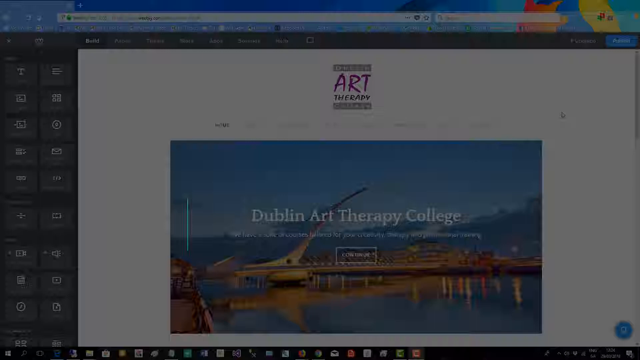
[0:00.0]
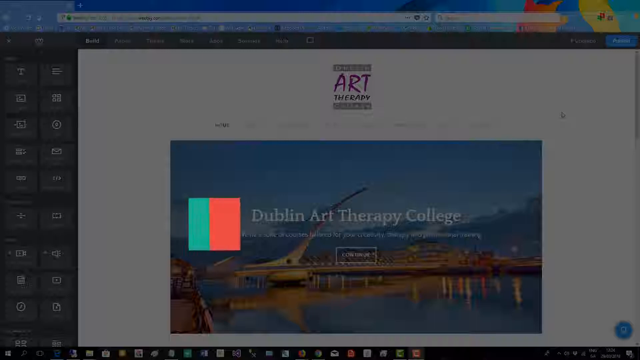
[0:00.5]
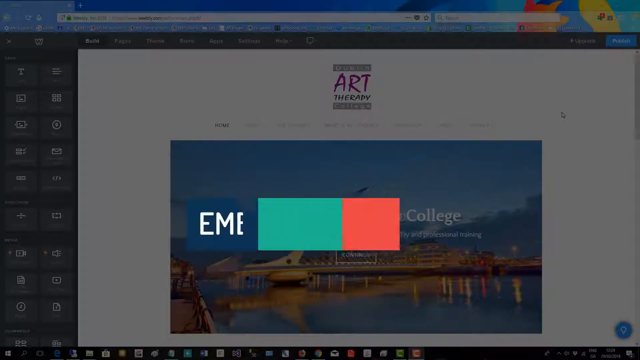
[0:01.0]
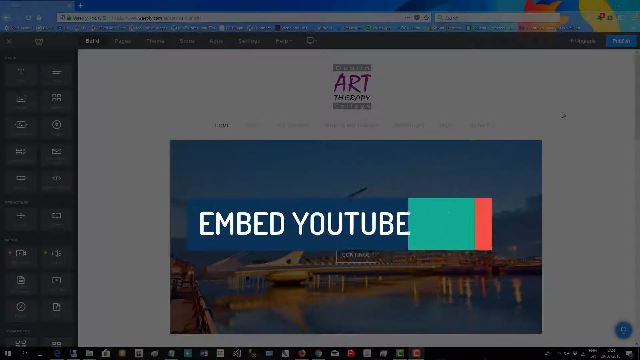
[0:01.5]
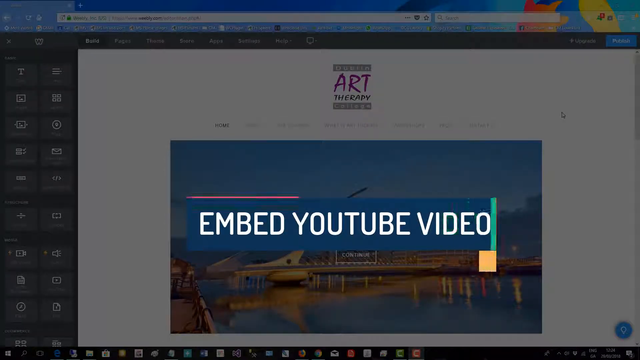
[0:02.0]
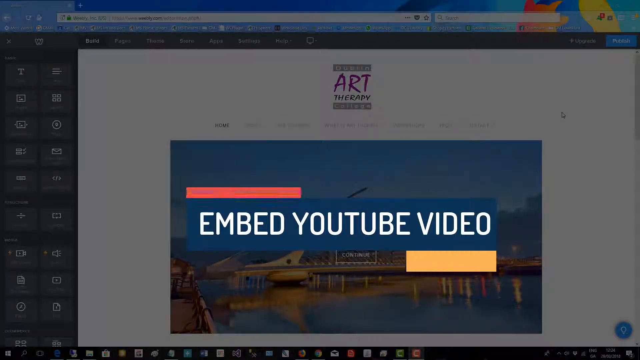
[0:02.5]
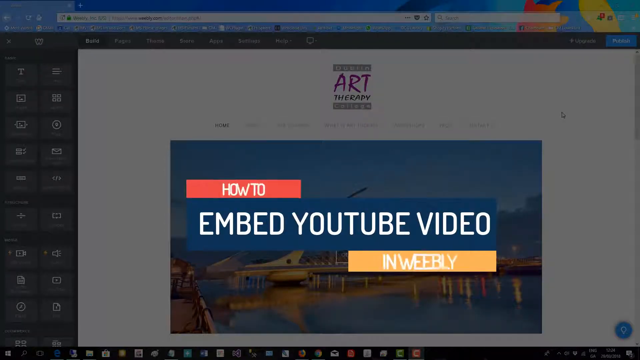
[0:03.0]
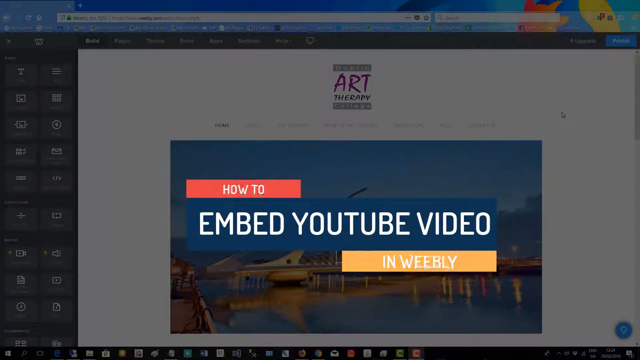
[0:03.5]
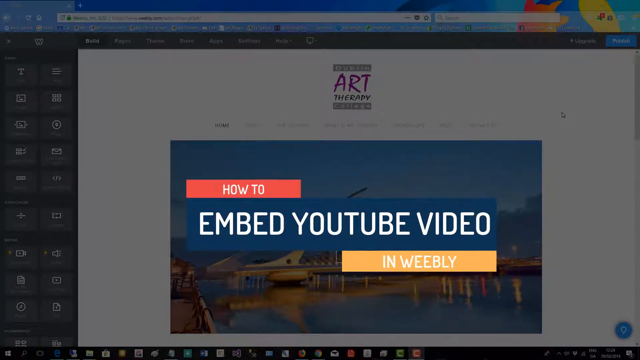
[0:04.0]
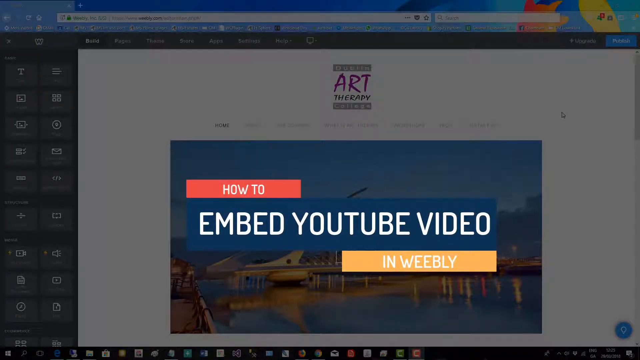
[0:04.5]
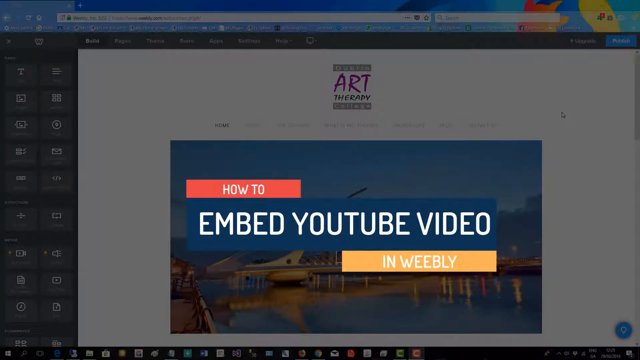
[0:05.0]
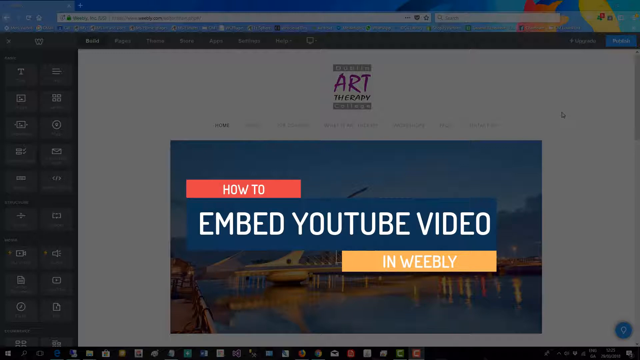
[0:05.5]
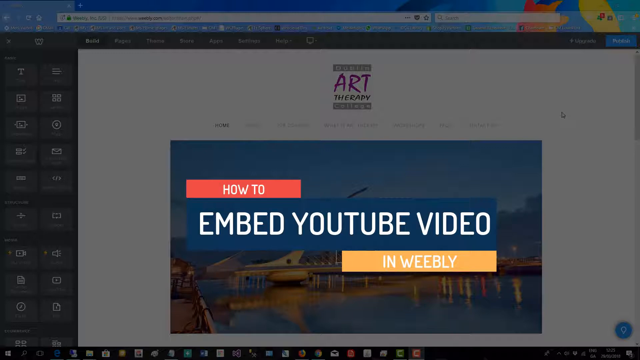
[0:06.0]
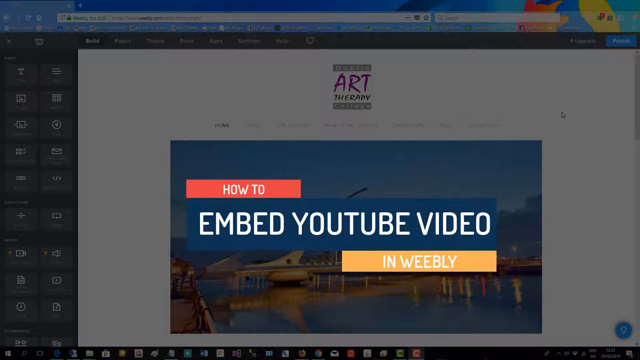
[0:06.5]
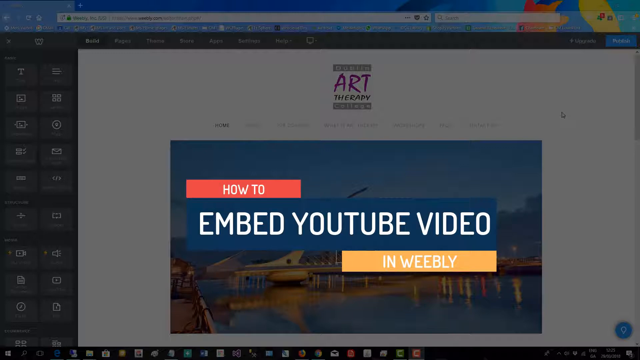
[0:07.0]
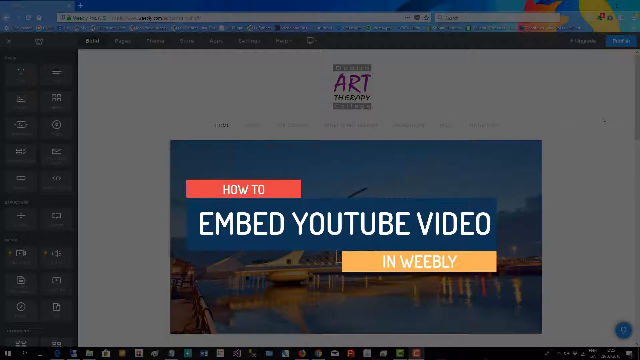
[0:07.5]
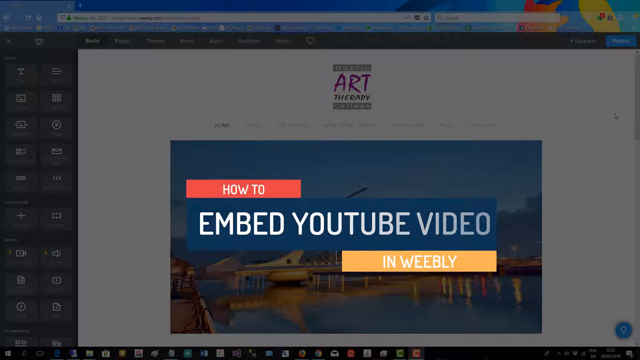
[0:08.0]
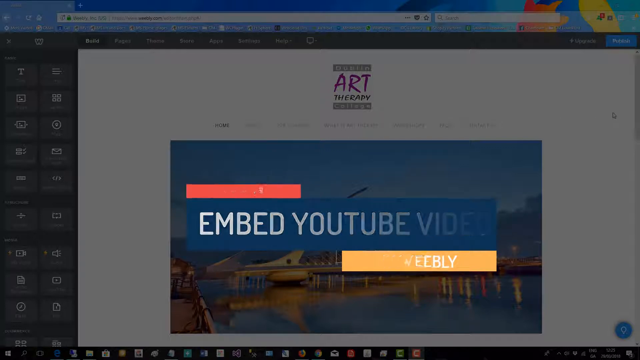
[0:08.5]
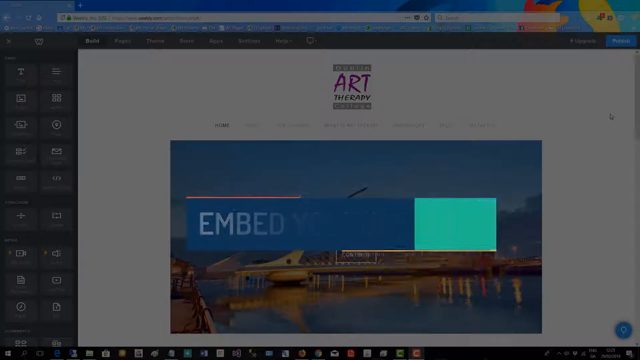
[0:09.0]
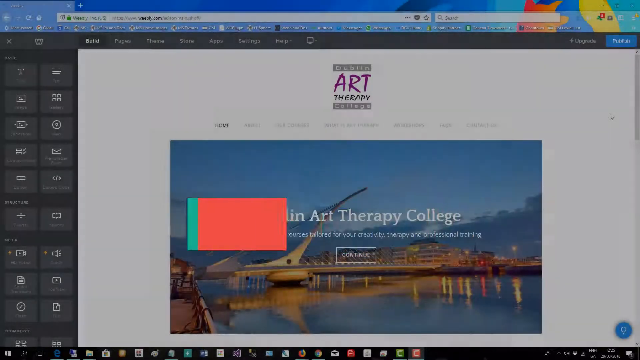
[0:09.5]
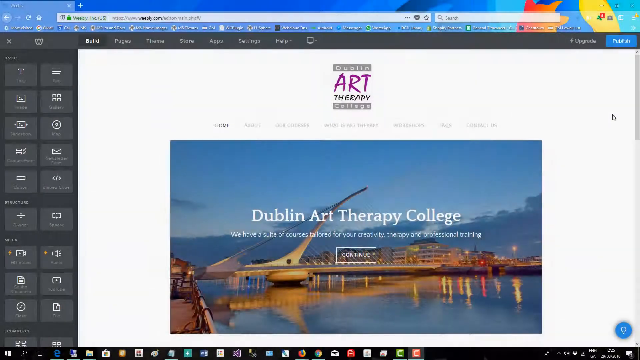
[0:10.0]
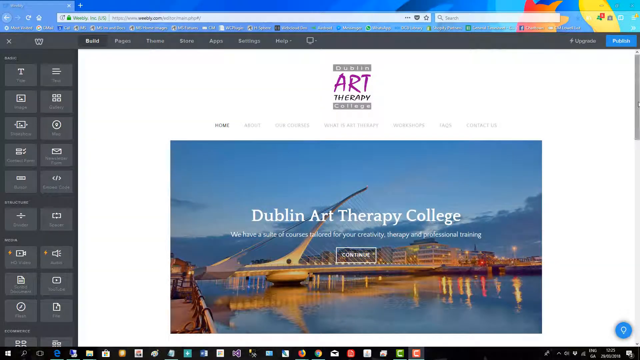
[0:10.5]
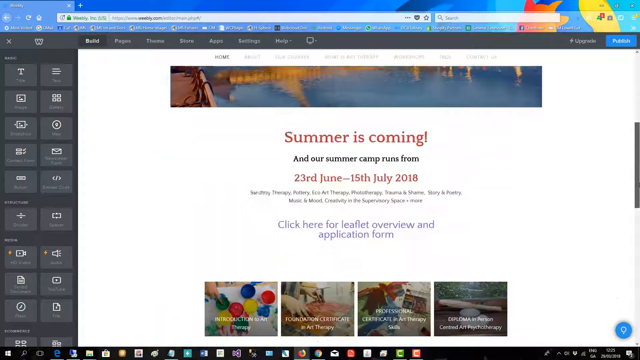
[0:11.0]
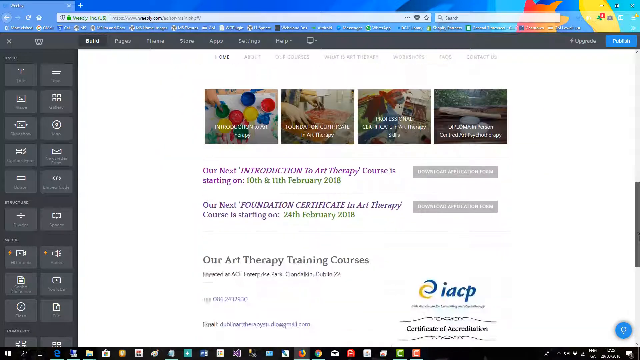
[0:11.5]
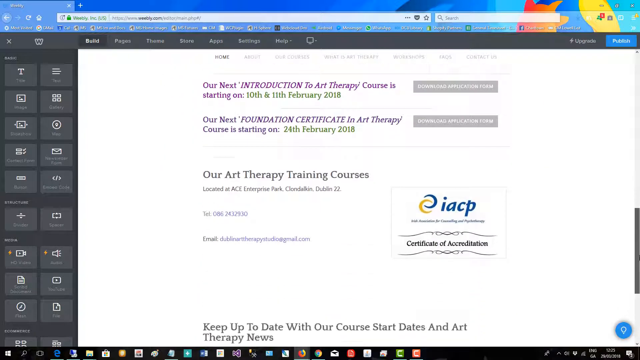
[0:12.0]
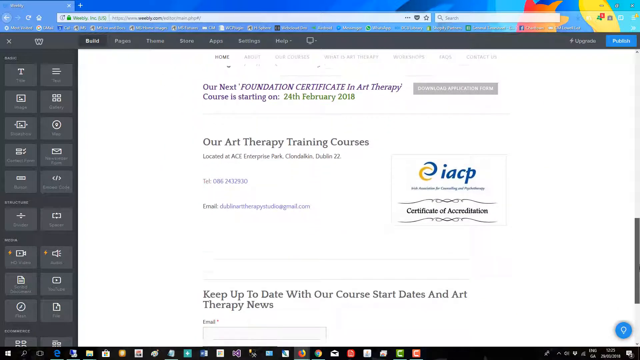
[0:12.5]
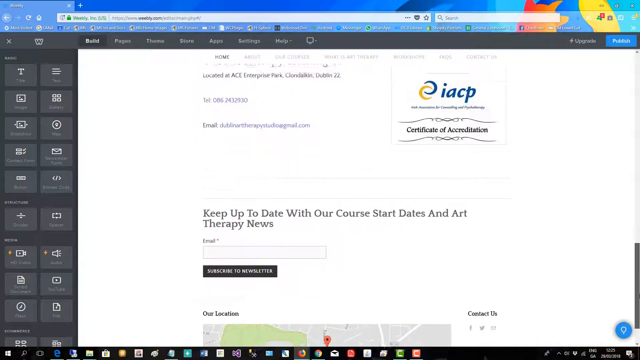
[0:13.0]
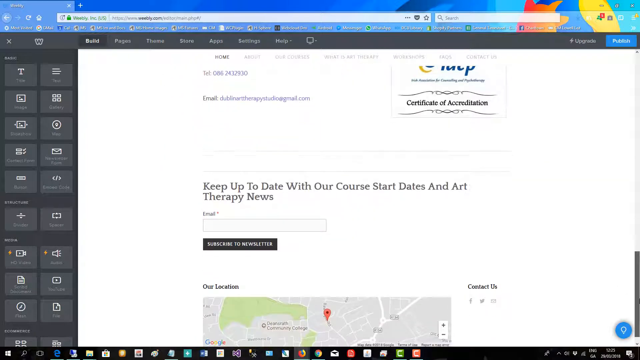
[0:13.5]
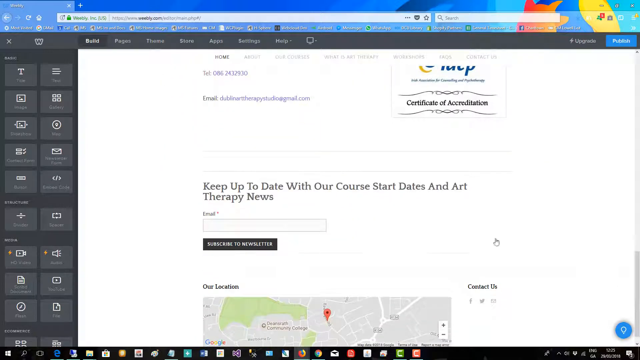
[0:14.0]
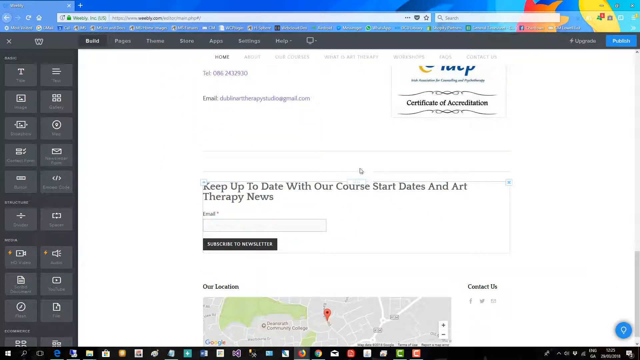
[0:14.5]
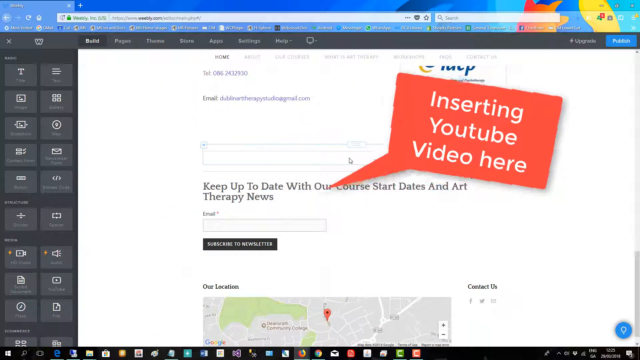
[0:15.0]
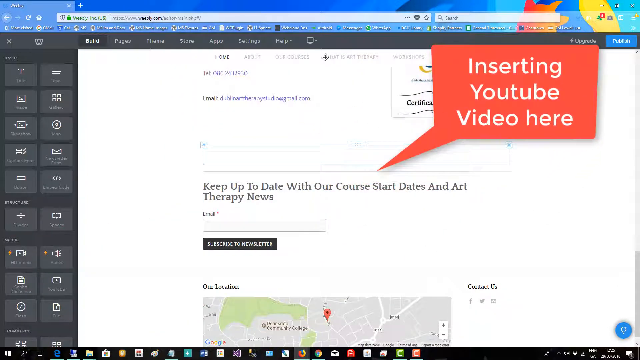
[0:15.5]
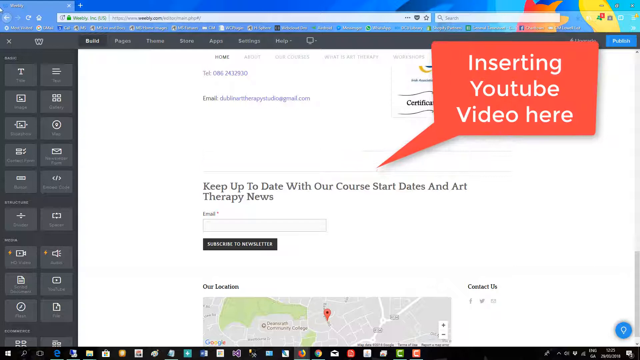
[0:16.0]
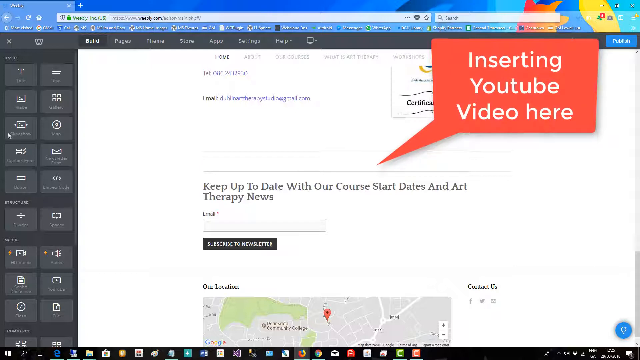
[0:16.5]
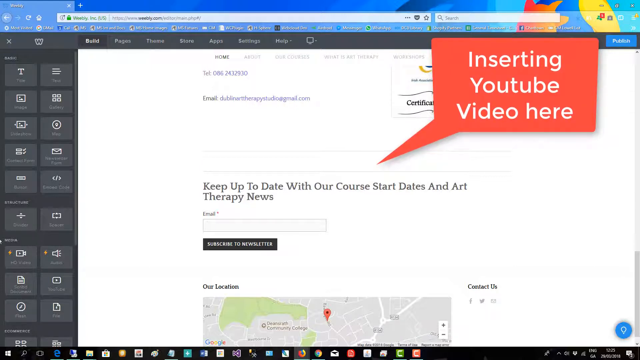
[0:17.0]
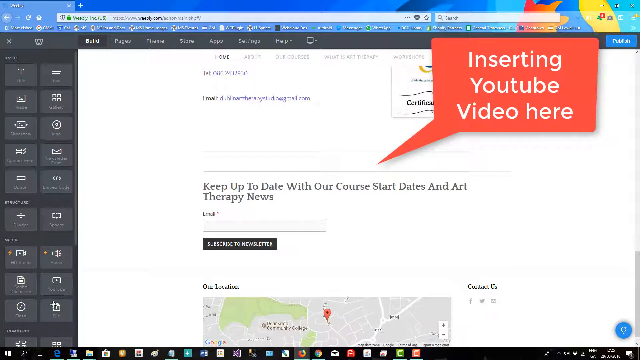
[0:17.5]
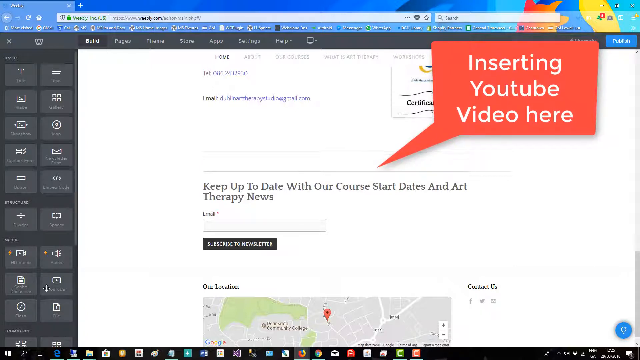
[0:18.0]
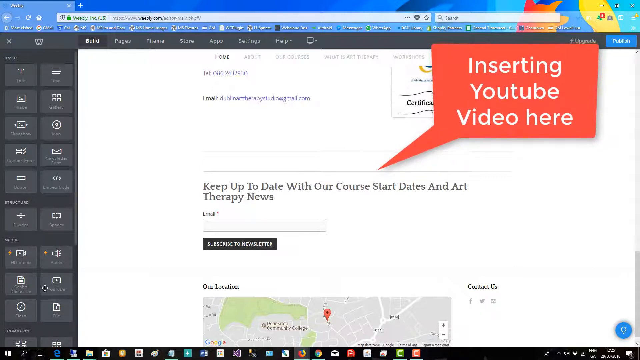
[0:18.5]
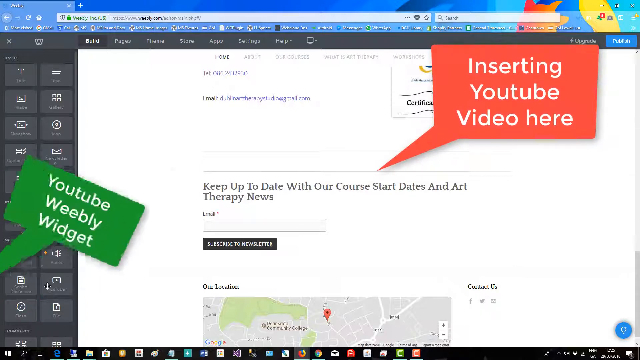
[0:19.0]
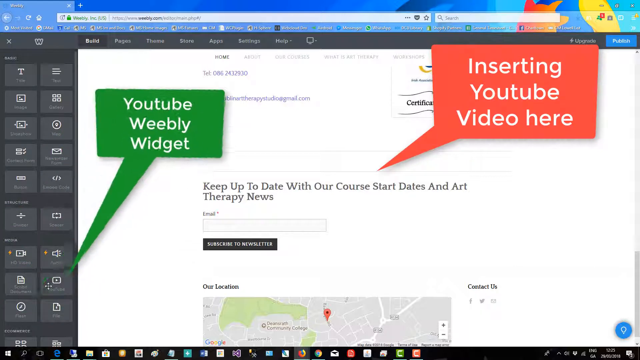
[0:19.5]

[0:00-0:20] White text reads "how to embed YouTube video in Weebly." The video then changes to a website for Dublin Art Therapy. Below that is an image of a building on top of the water, in the middle, with a symbol and the text "Dublin Art Therapy College," along with a field containing the text "continue." The cursor moves down to text reading "keep up to date with our course start dates and art therapy news," with a field below it for entering an email. Above that is a message symbol shaded red with the text "Inserting YouTube video here." Another field shows white text reading "YouTube Weebly Widget."